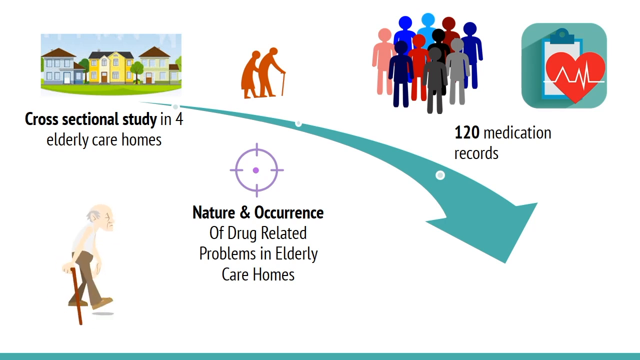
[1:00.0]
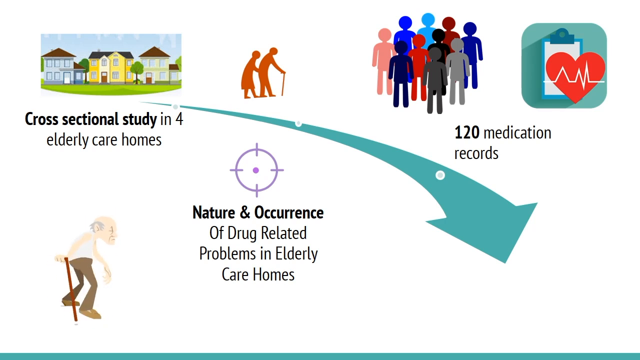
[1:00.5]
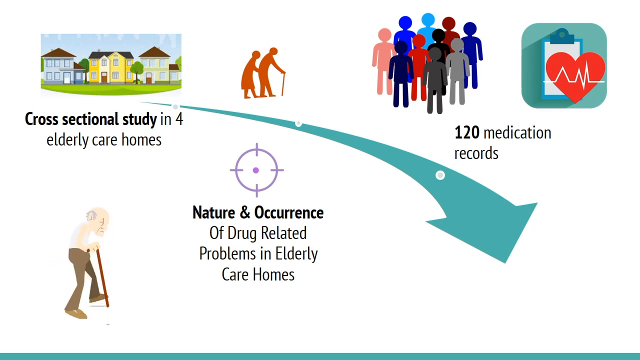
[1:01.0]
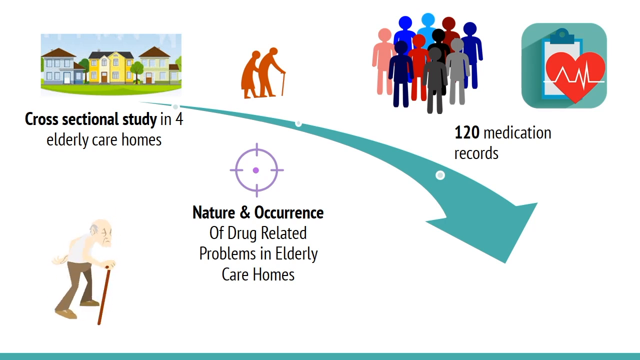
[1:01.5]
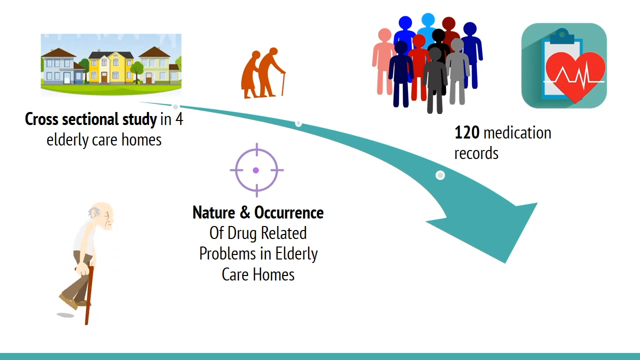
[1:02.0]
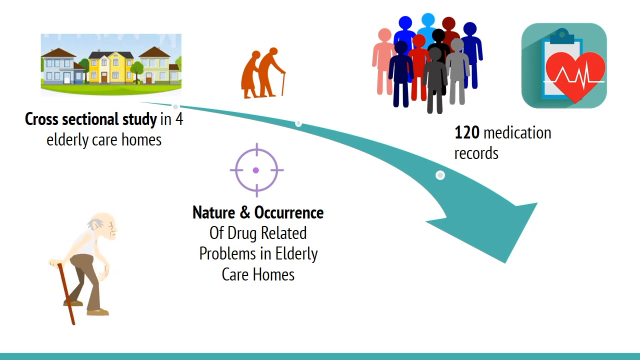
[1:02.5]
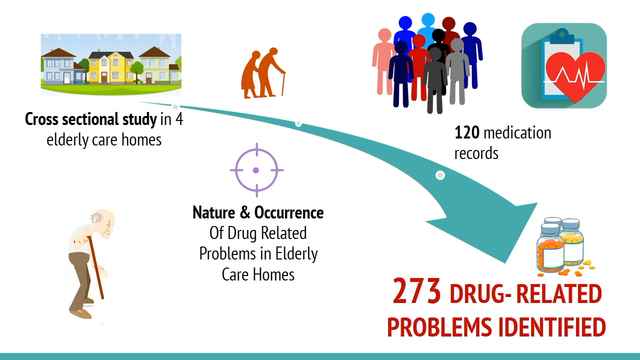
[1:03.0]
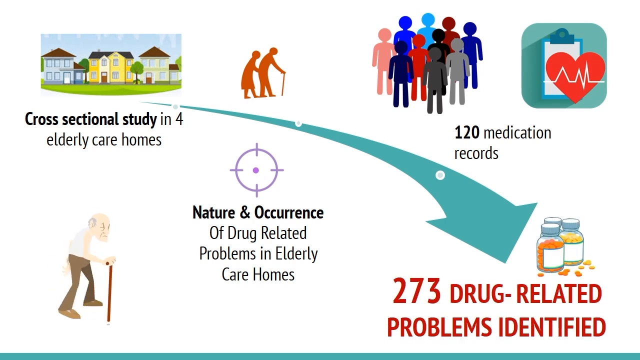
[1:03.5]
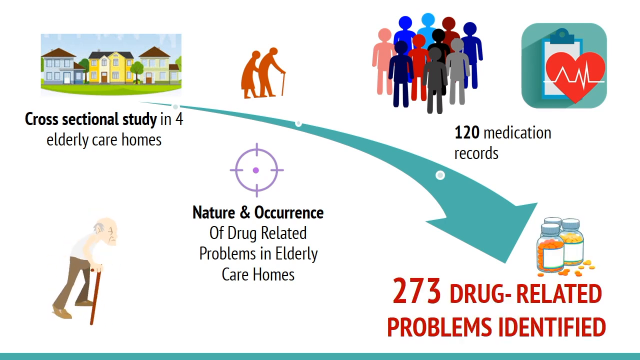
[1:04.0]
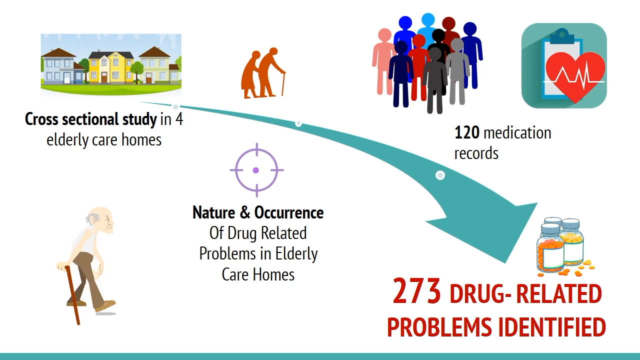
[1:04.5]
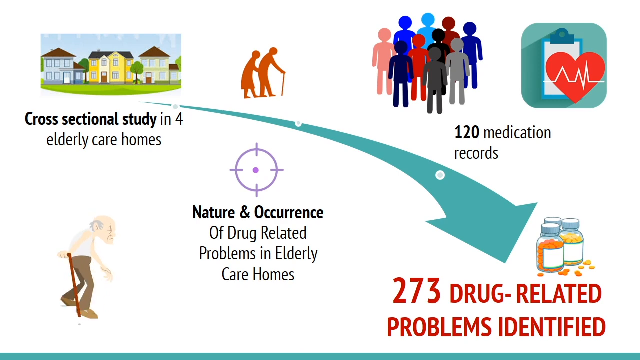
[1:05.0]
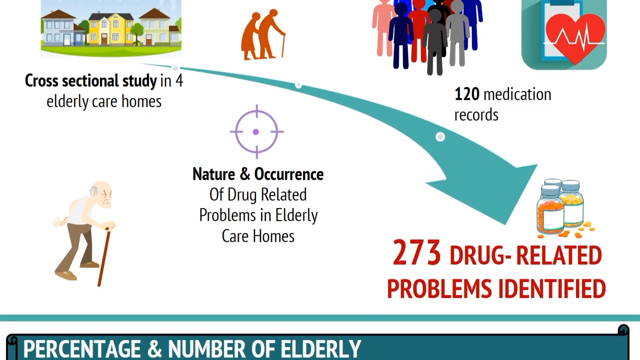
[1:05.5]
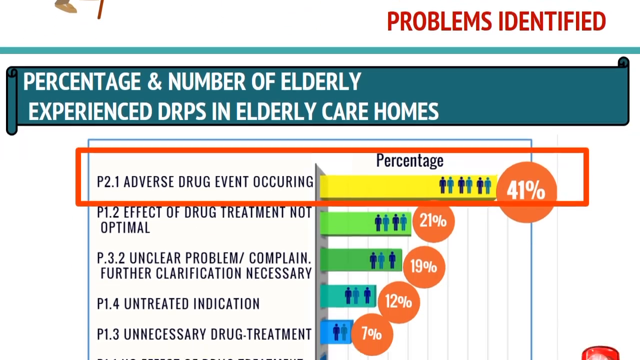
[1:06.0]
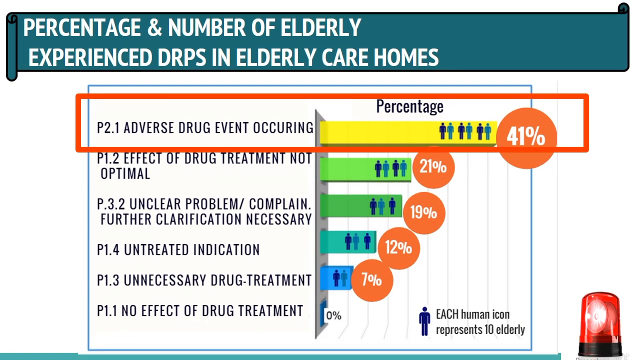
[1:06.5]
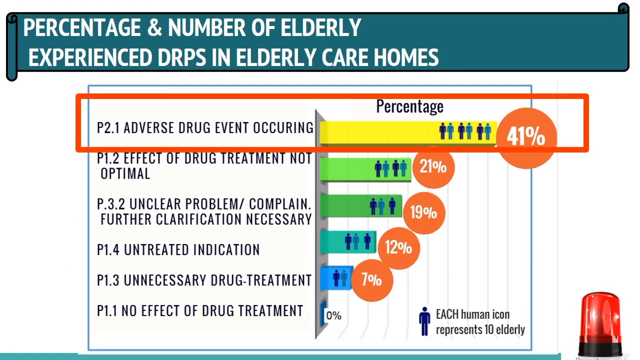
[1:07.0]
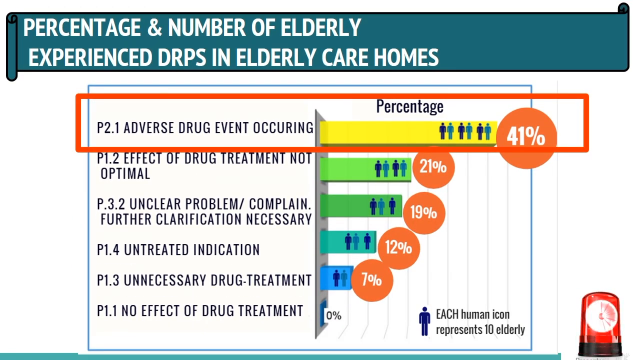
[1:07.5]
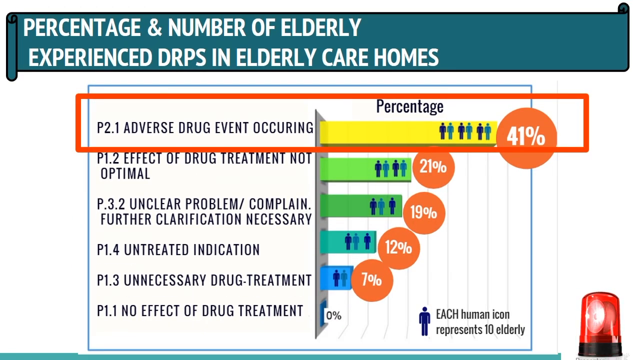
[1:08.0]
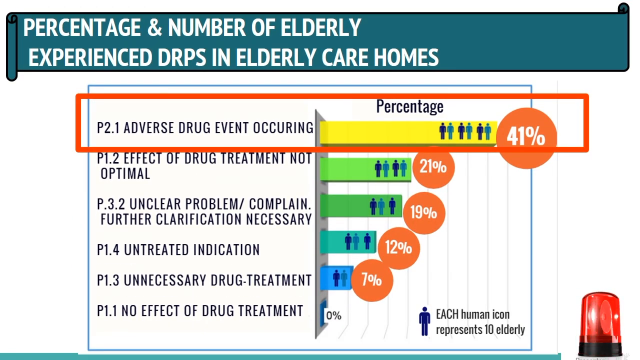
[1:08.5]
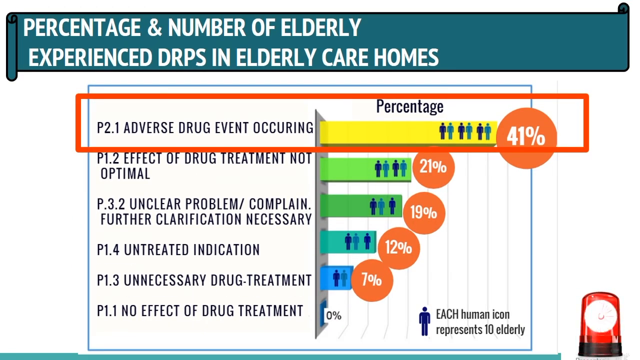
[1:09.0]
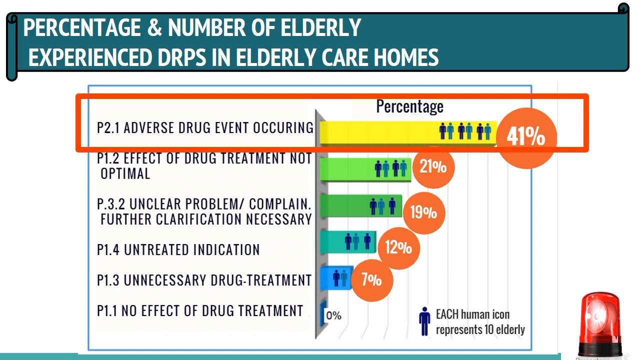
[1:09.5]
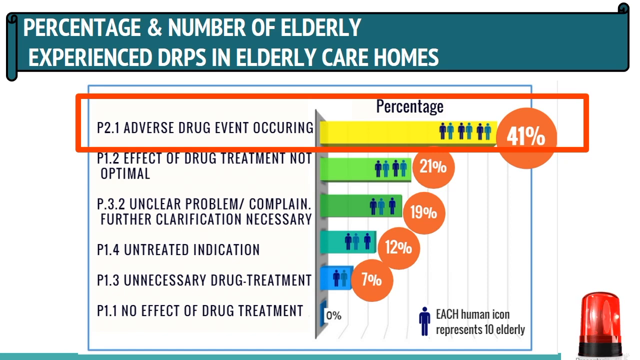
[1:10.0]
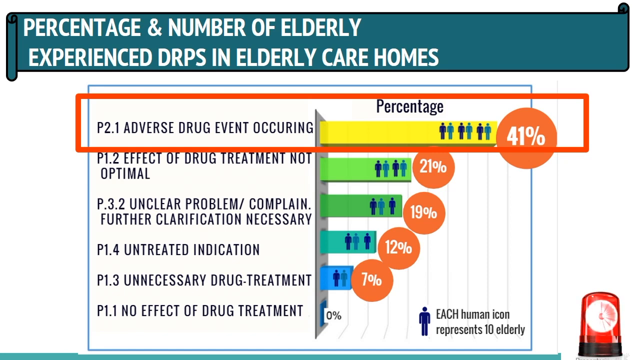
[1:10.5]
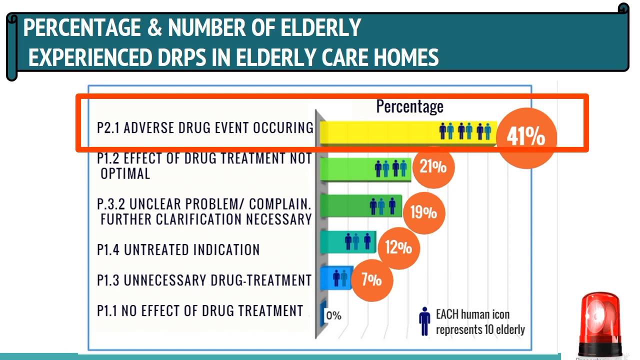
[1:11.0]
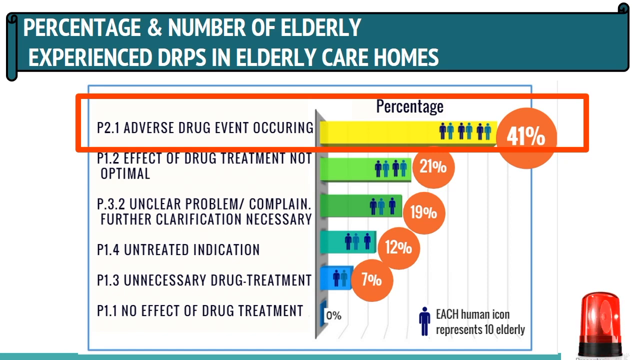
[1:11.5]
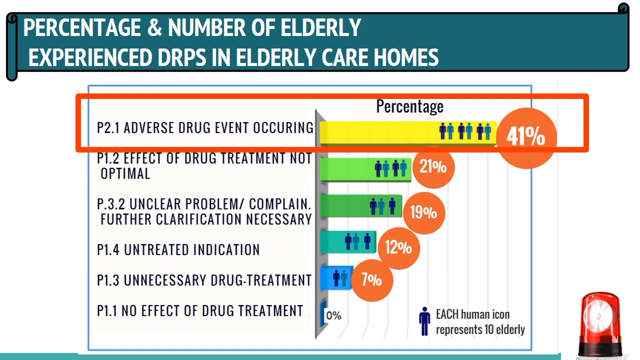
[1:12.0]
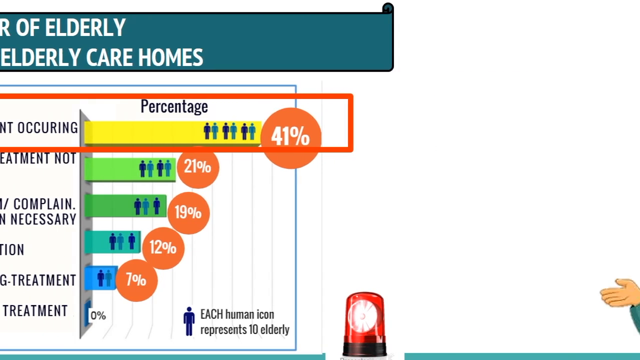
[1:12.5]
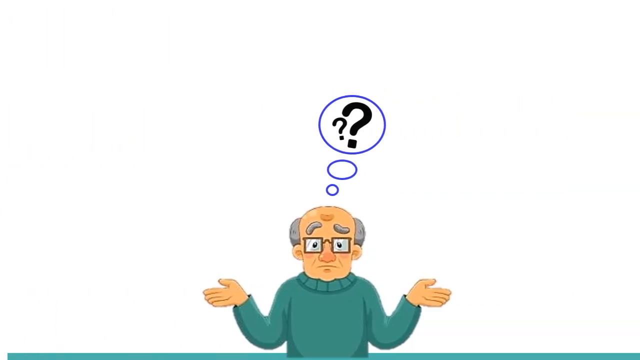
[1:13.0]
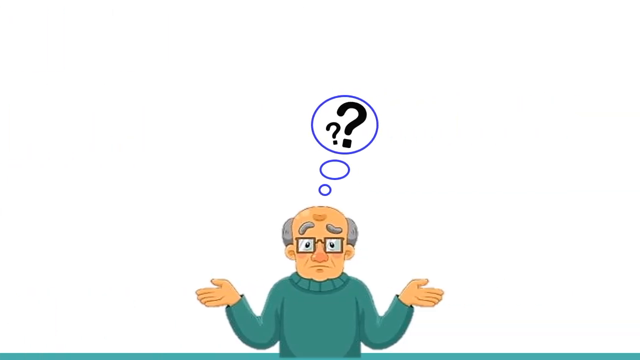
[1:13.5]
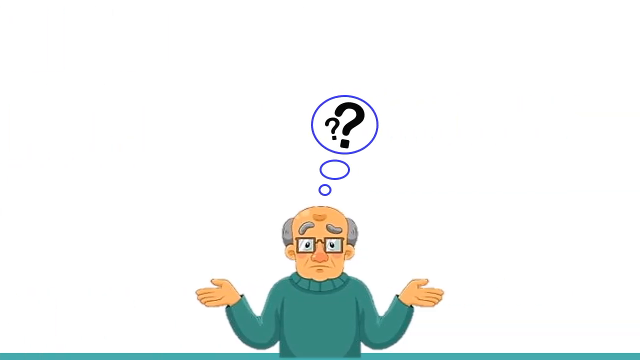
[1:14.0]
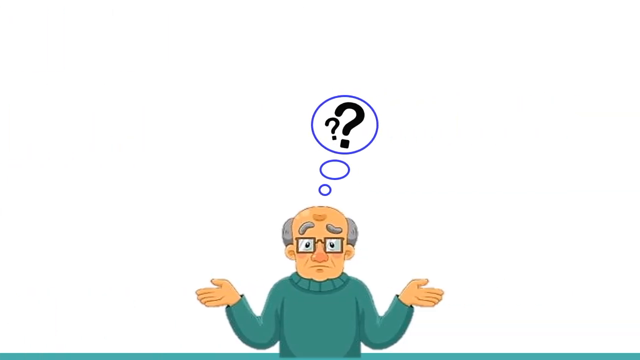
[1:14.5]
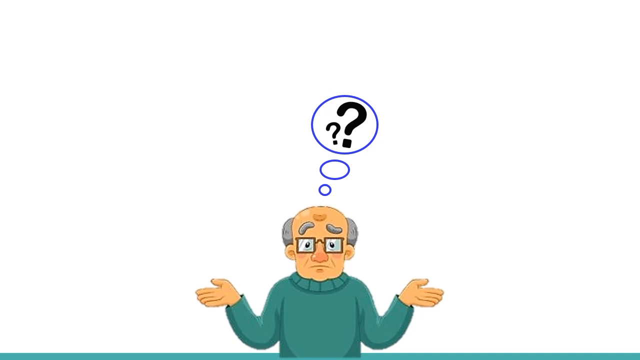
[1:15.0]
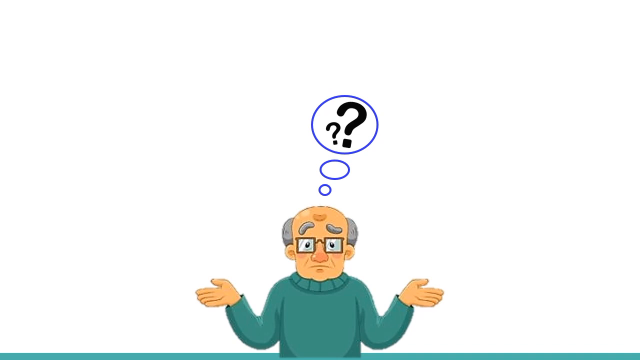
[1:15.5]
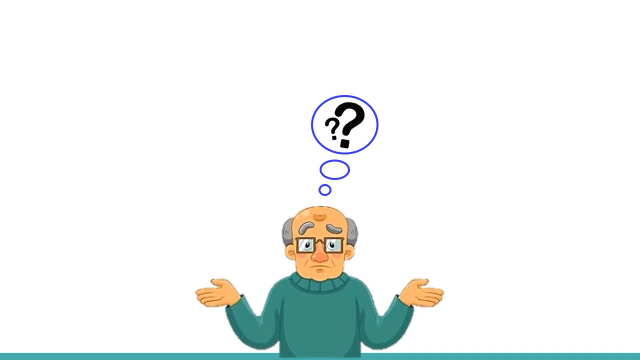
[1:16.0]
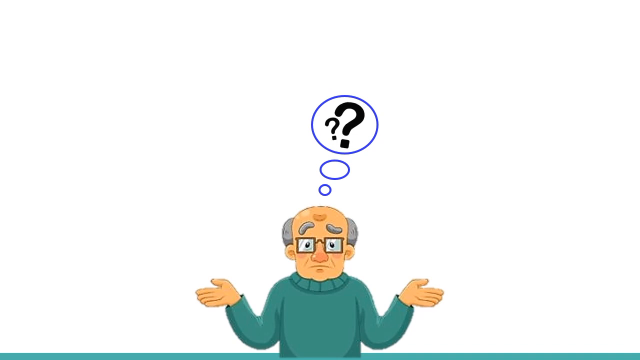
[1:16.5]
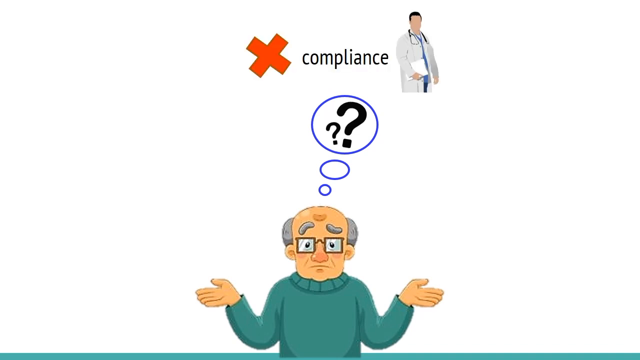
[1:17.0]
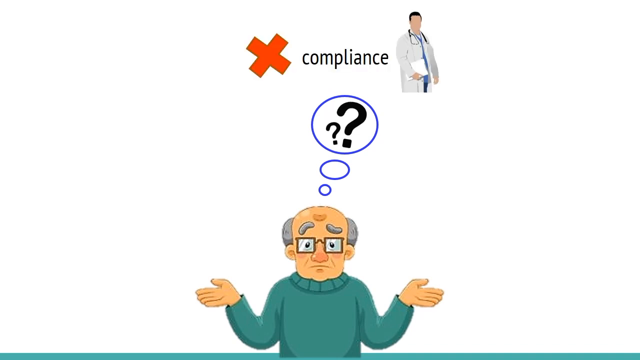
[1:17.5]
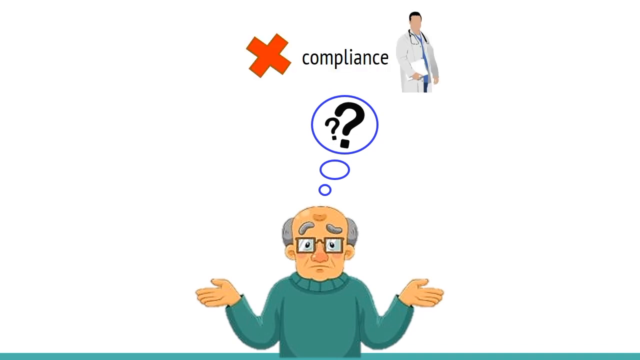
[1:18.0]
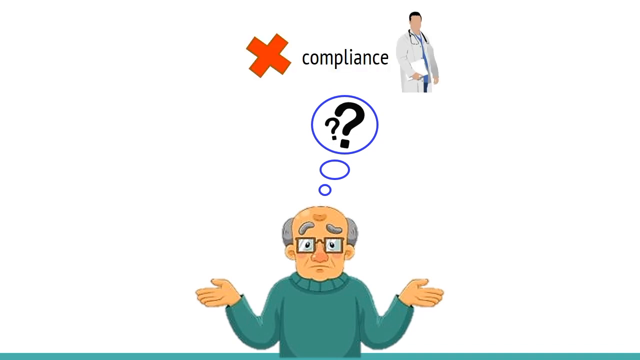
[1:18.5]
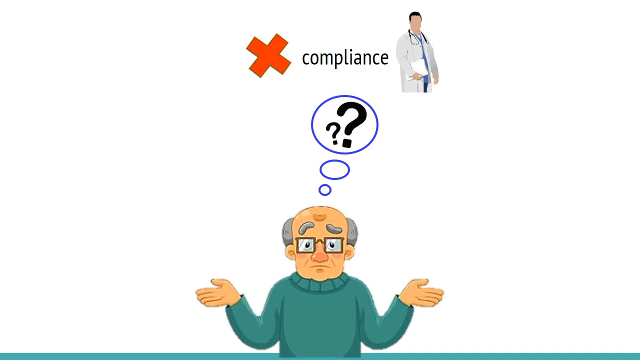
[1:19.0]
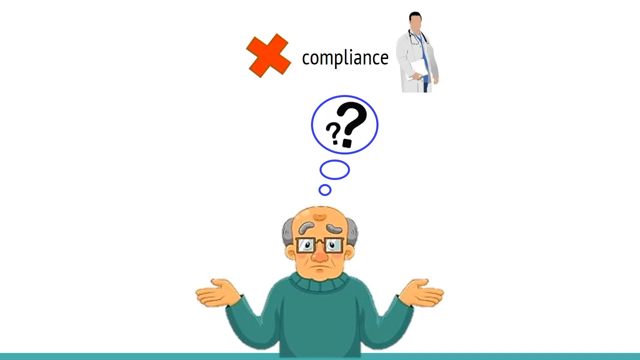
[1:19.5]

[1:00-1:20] The gradient page still shows the cross-sectional study in four elderly care homes, the nature and occurrence of drug-related problems in elderly care homes, the 120 medication records, the pictures, and the little elderly man with his walking cane at the bottom. Text then appears reading "273 drug-related problems identified." The next page reads "percentage and number of elderly experienced DRPS and elderly care homes." A big red block surrounds the first line, "P21 adverse drug event occurring," from which a yellow line extends to "41%" inside a round red circle, with six people lined up on the line. The second line, "PT2 effect of drug treatment not optimal," has a green line with four people and "21%." "P3.2 unclear problem complain further classification necessary" has another green line with "19%." "P1.4 untreated indication" has a blue-green line with "12%." "P1.3 unnecessary drug treatment" shows "7%" with a blue line and two people. The next screen shows an elderly man standing in the lower middle portion, bald on top with gray hair on the sides and wearing glasses, holding his hands up as if saying "what?" Above his head is a blue circle with two large question marks in it.